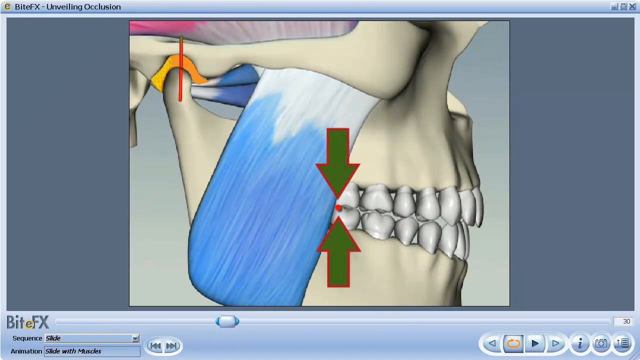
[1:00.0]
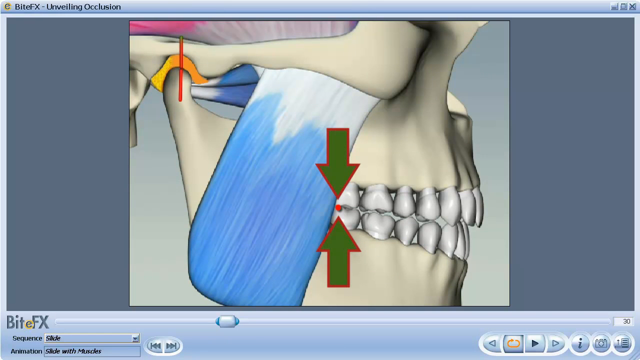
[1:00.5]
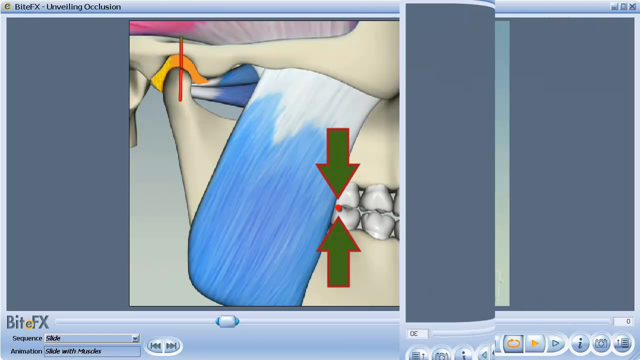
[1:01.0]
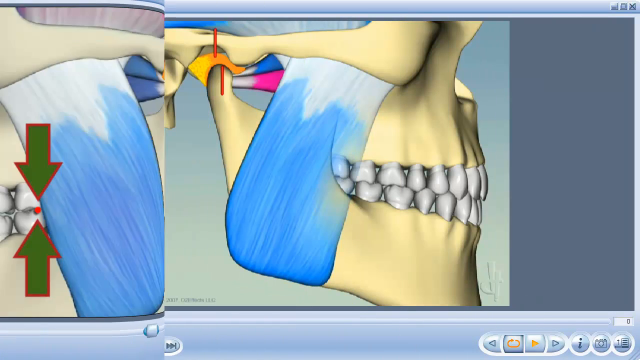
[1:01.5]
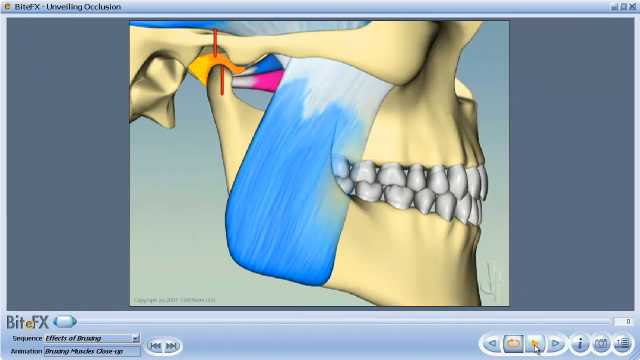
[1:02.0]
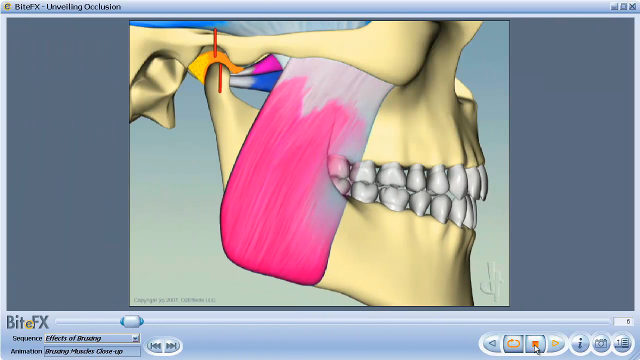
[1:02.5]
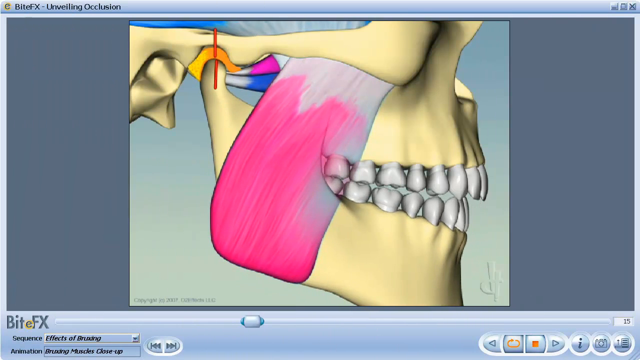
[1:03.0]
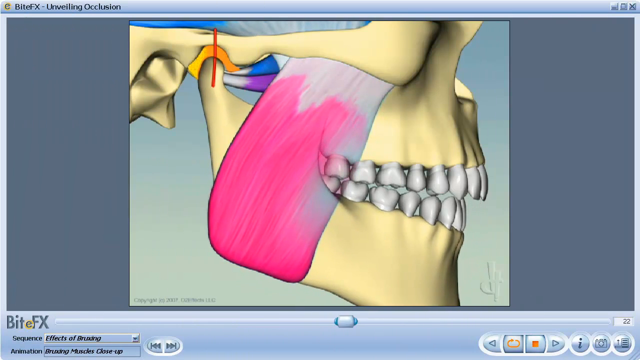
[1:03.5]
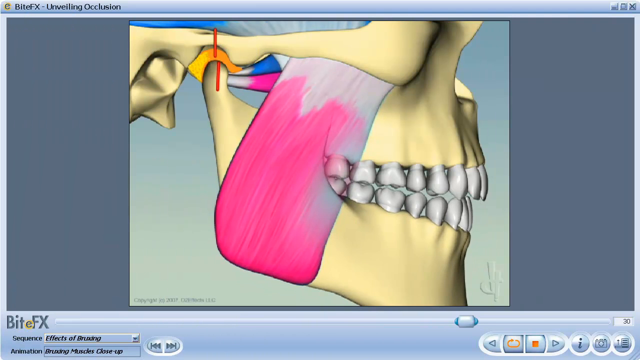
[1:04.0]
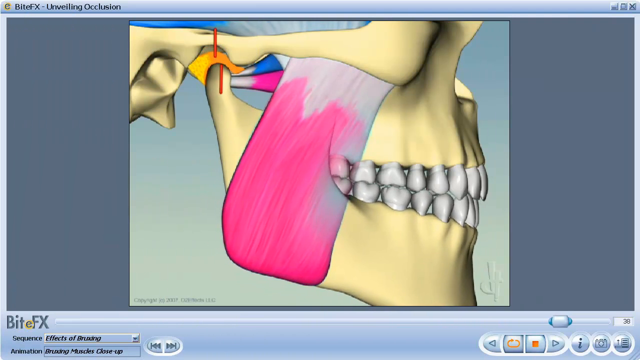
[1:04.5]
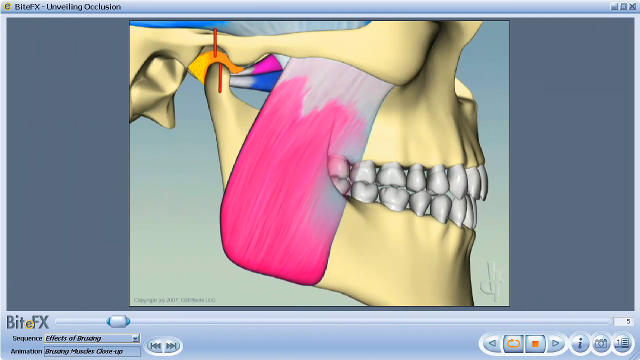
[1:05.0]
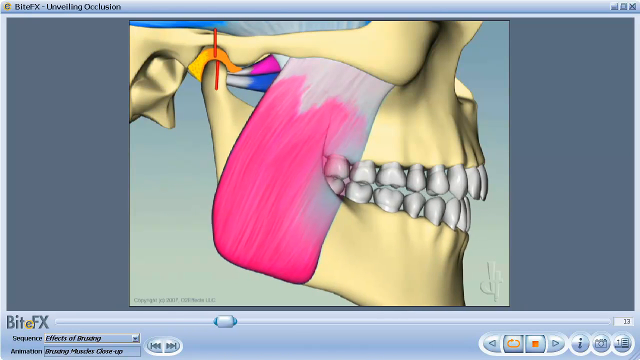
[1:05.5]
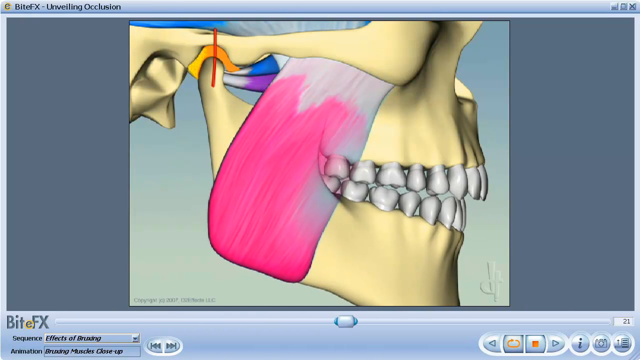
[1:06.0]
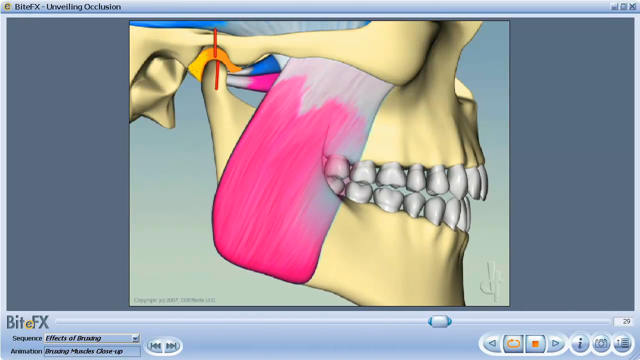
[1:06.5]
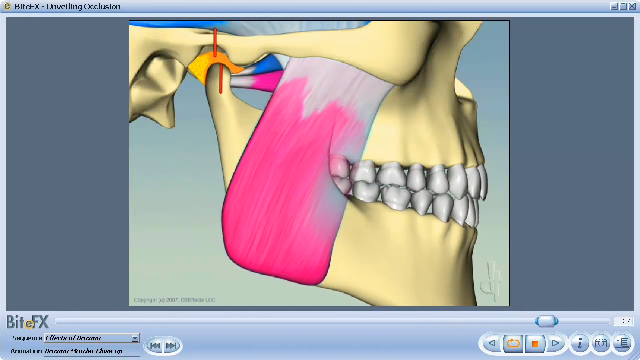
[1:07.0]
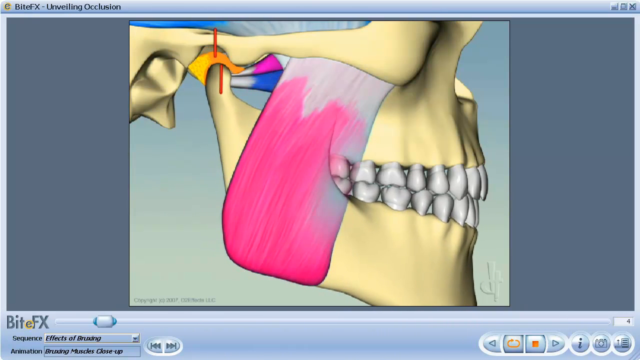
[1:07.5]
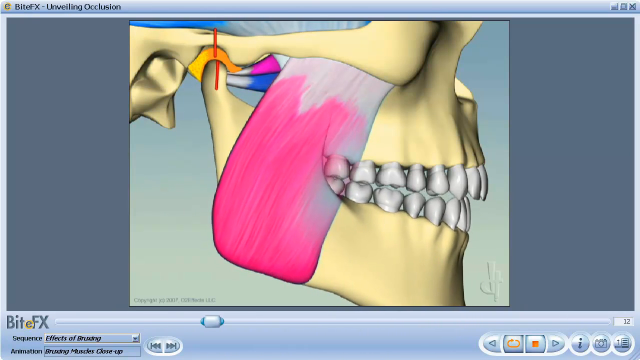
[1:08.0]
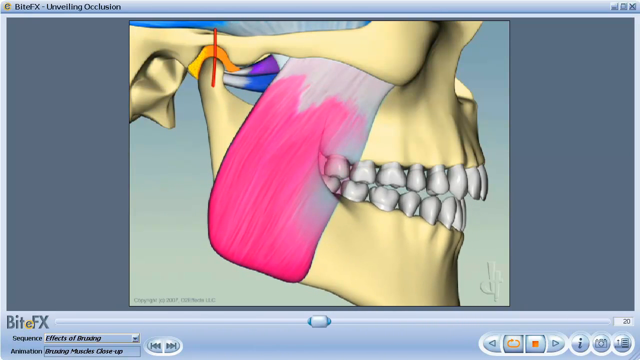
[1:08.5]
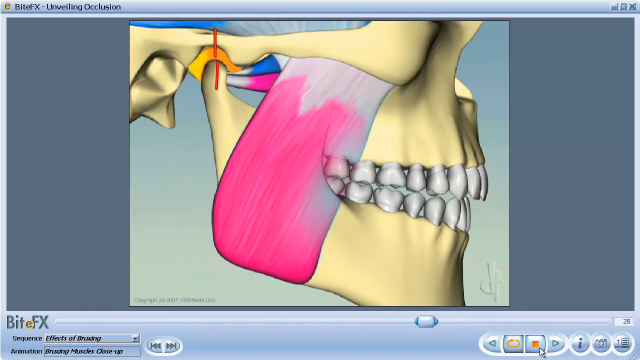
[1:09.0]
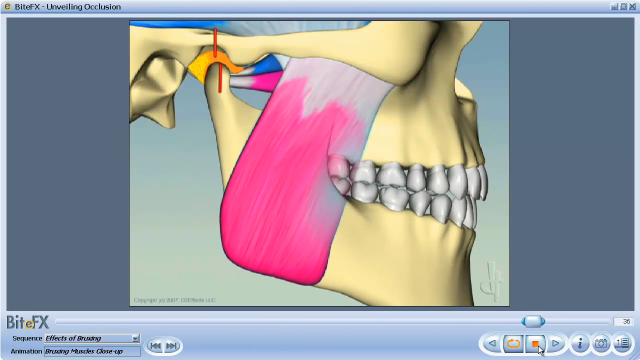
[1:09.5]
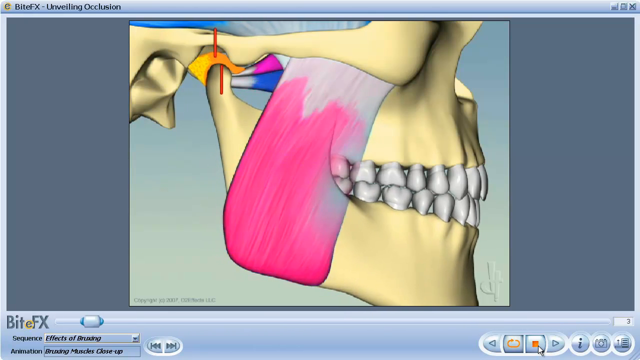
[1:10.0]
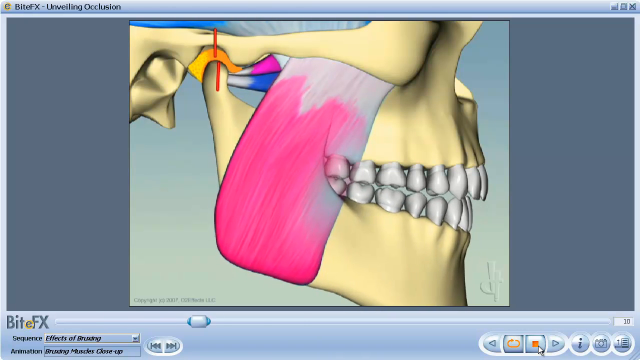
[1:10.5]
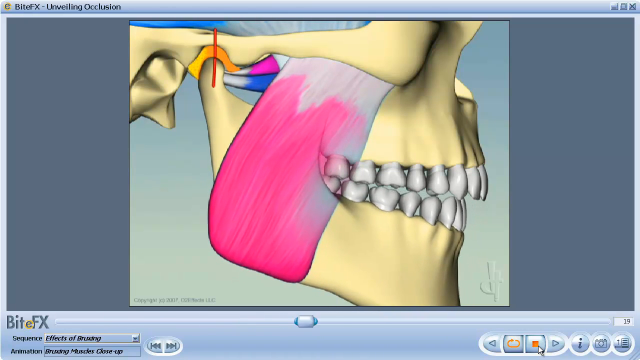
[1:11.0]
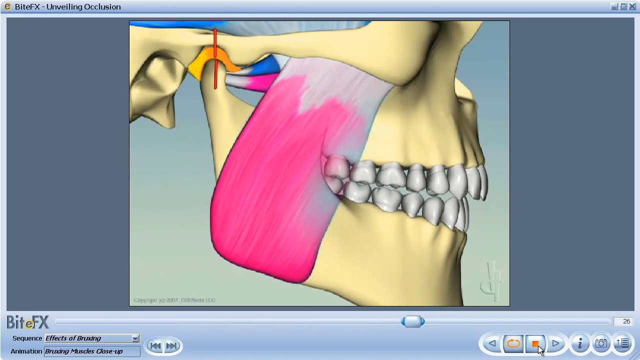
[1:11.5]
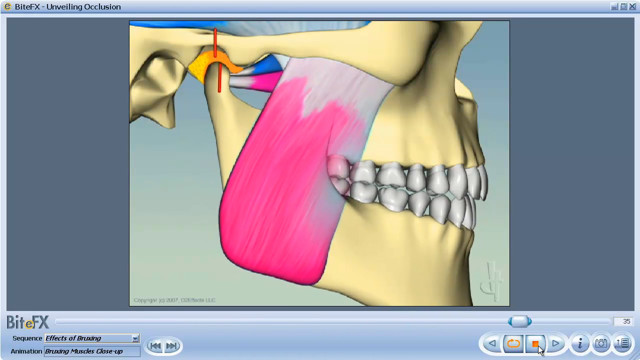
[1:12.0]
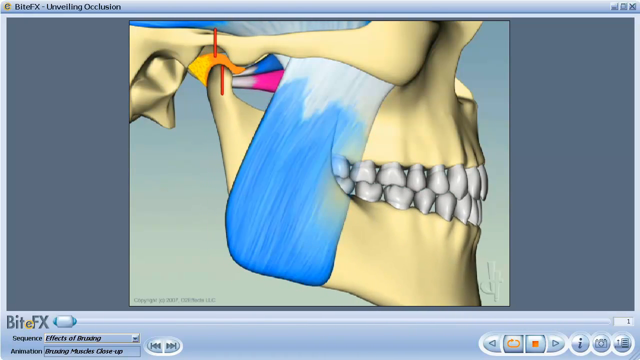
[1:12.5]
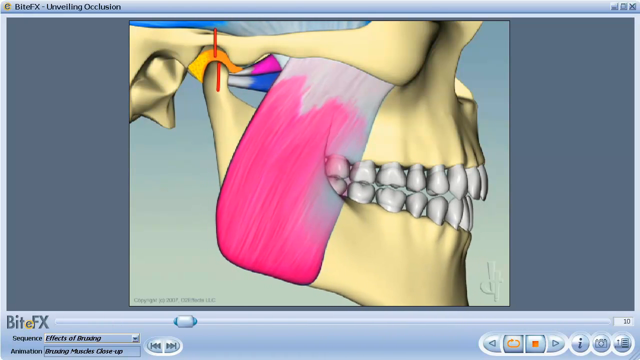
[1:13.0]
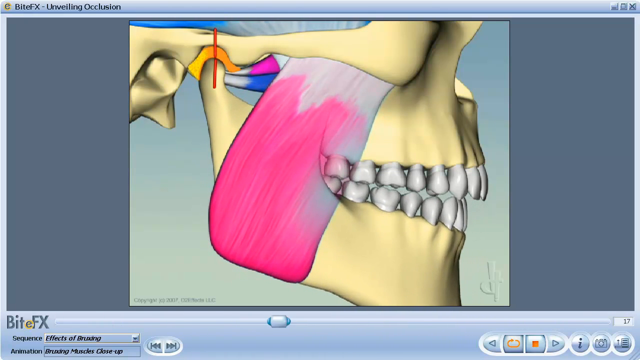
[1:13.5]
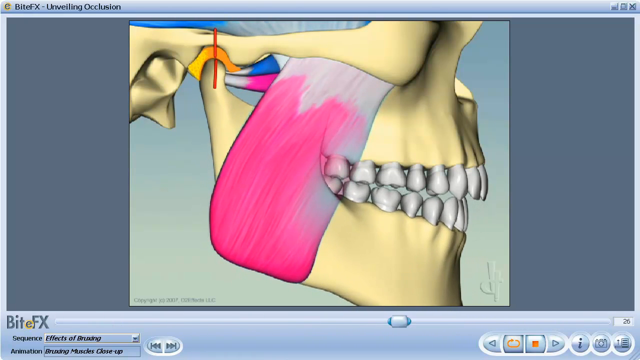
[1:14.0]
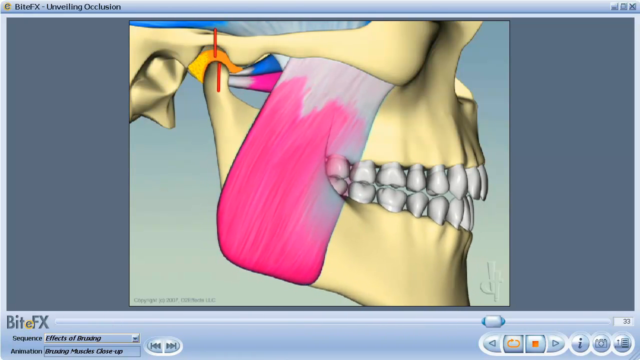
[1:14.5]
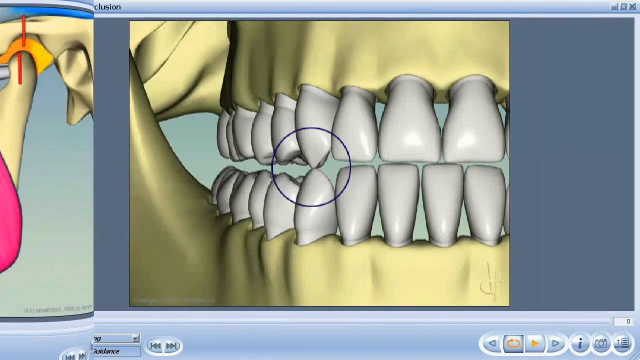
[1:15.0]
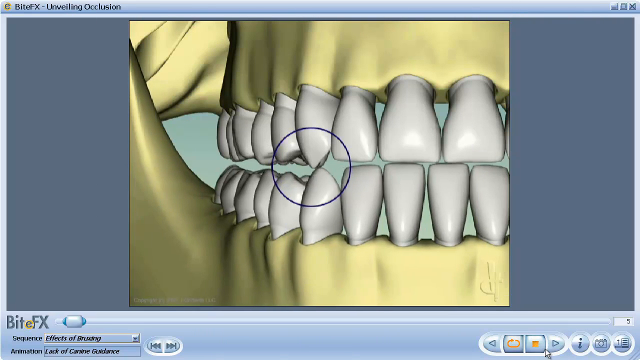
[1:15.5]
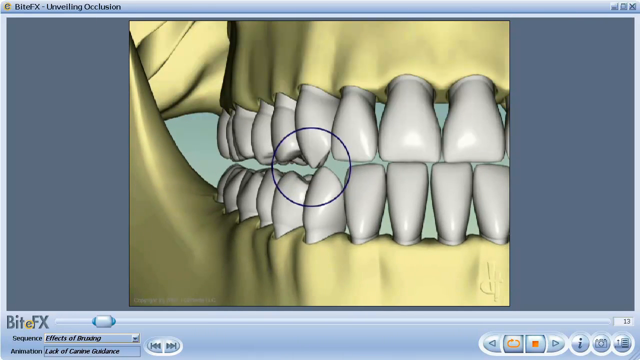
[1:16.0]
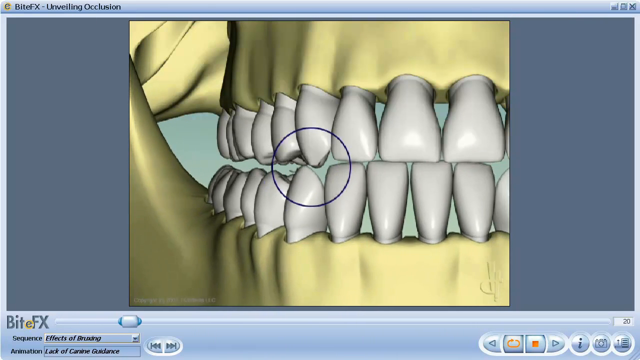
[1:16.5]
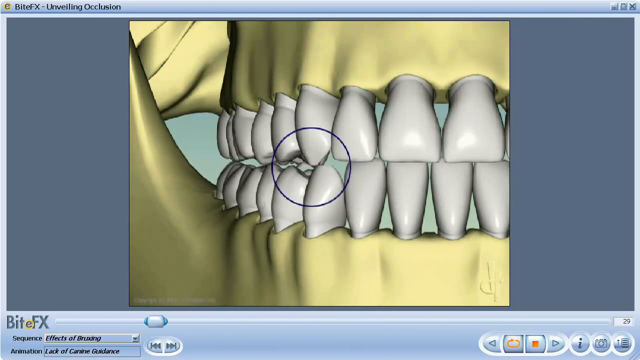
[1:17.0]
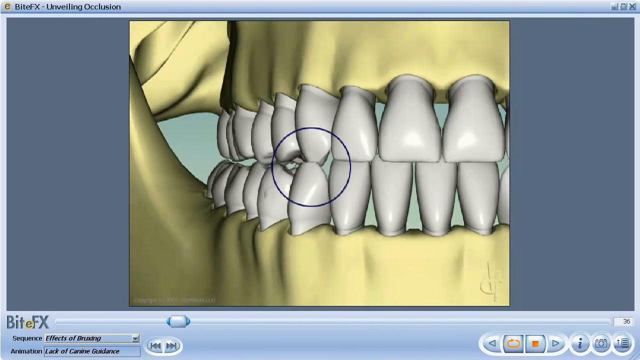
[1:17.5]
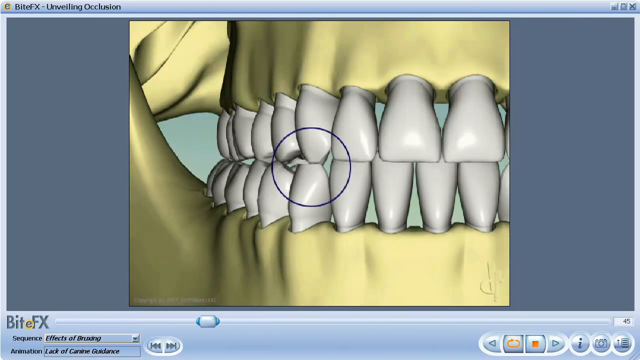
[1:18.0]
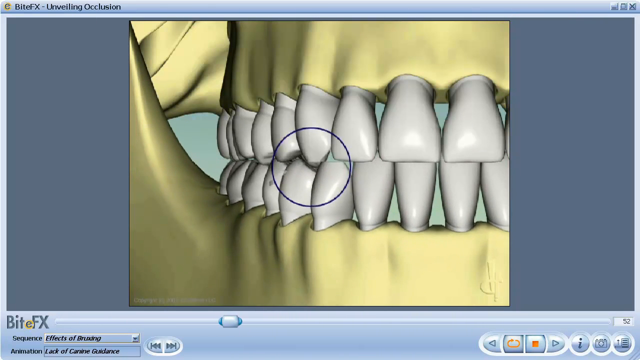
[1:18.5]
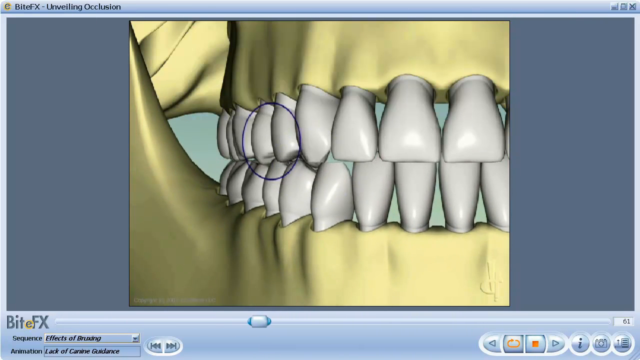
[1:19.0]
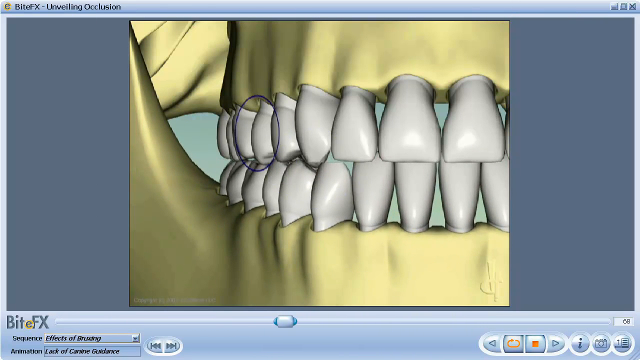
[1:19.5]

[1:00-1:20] The BiteFX software, unveiling the occlusion, shows a skull with teeth that are touching. A little red circle marks the area where the teeth touch, and a green and a red arrow point down and up. The next animation shows the teeth closed and clenched, with a white and blue strap kind of hanging over the skull's face; the blue area turns pink and the teeth grind up and down repeatedly. Another animation shows a blue circle over some of the teeth as teeth grind away and chip other teeth, with little pieces flying off. Then another area of teeth is shown also being ground.